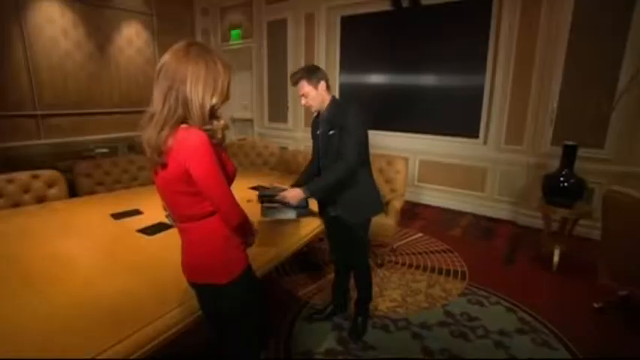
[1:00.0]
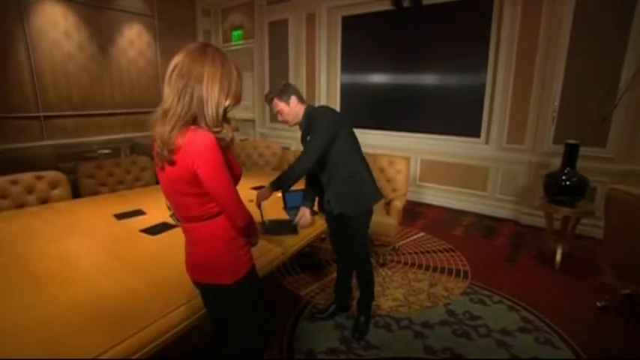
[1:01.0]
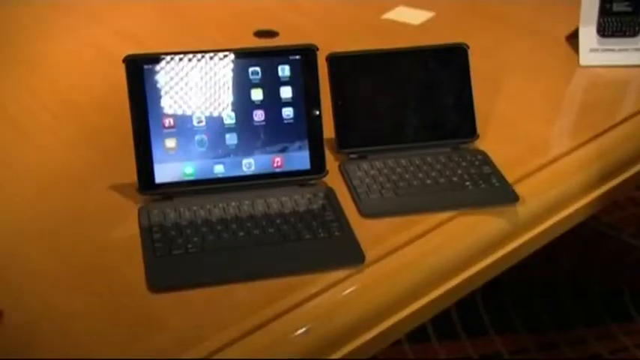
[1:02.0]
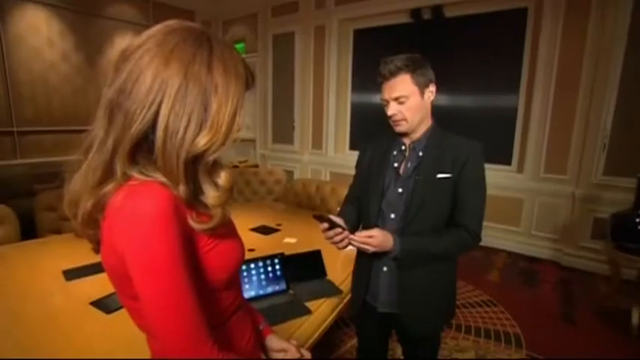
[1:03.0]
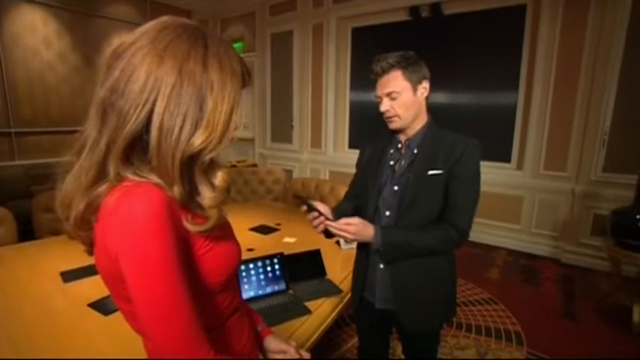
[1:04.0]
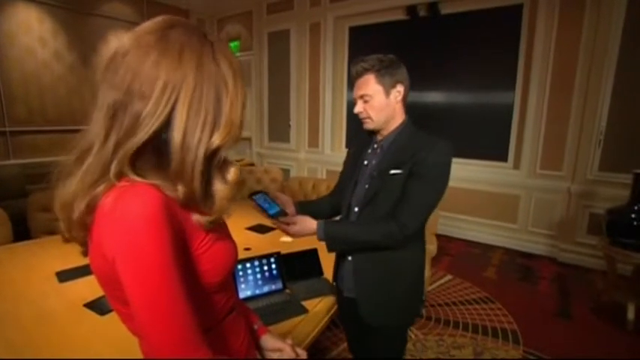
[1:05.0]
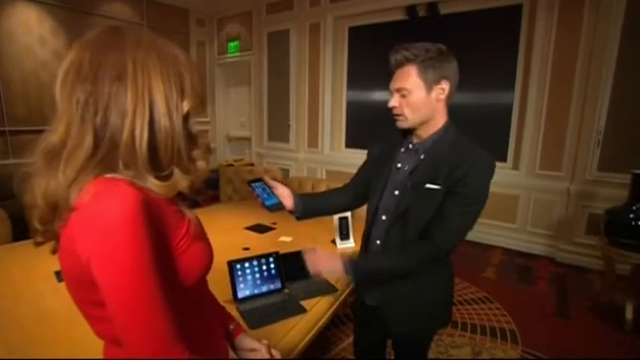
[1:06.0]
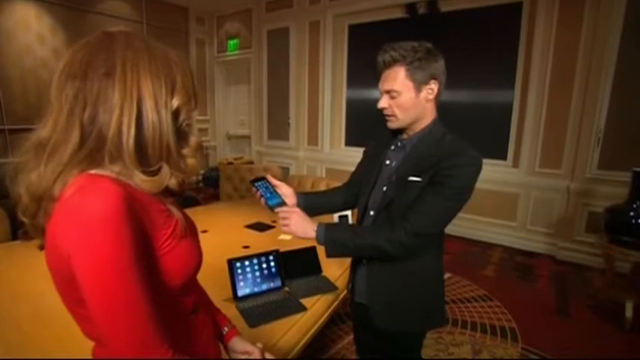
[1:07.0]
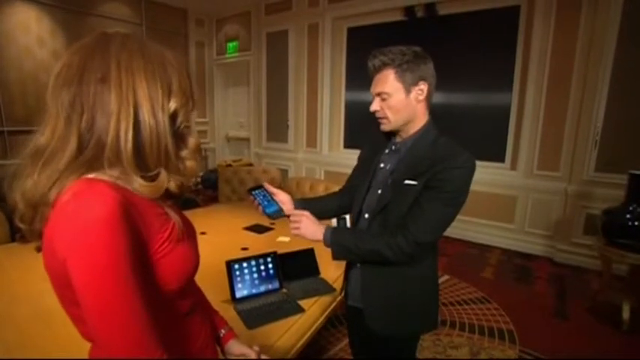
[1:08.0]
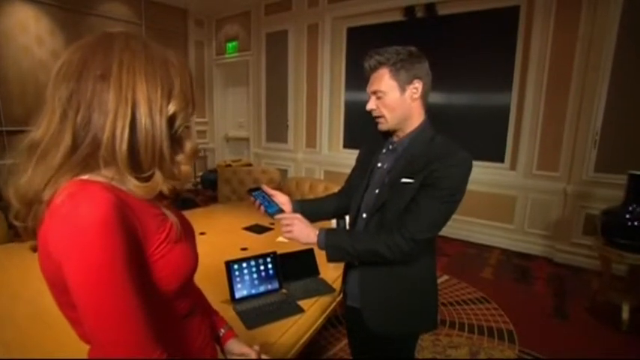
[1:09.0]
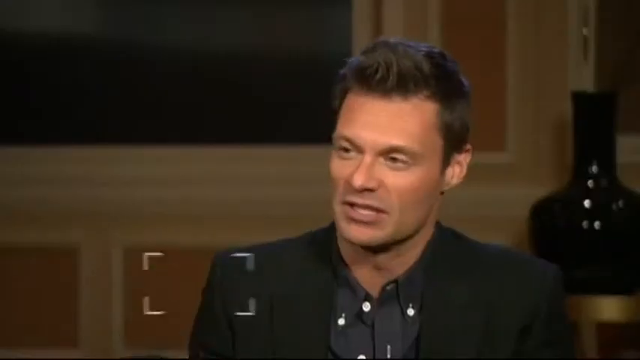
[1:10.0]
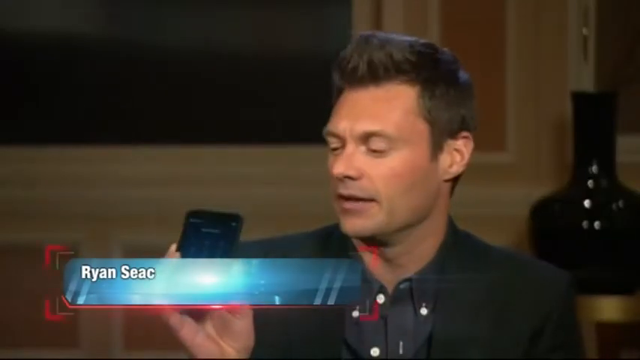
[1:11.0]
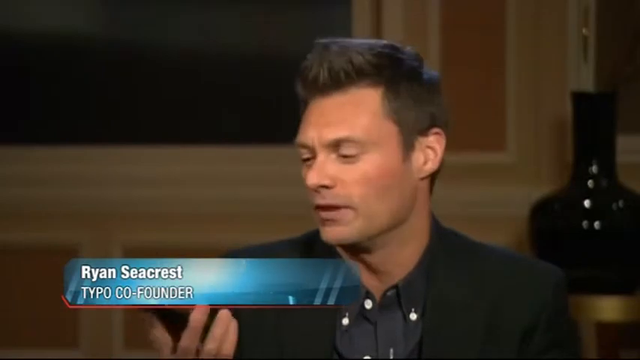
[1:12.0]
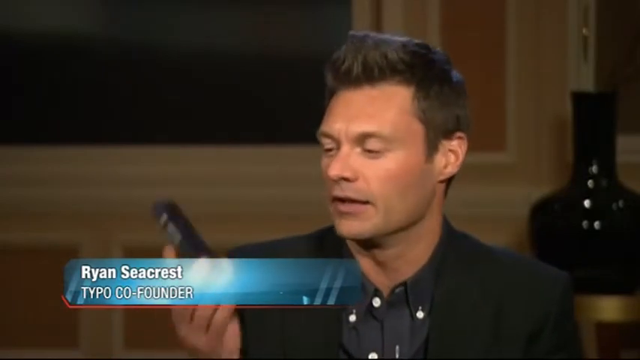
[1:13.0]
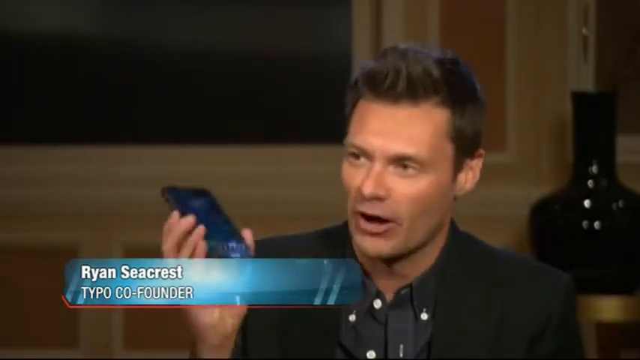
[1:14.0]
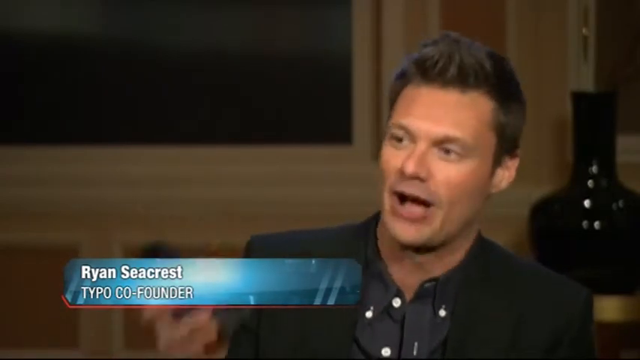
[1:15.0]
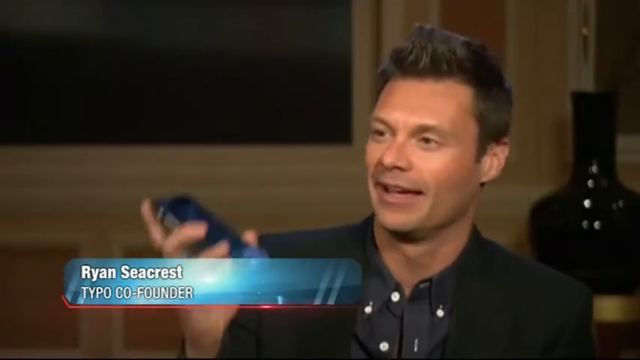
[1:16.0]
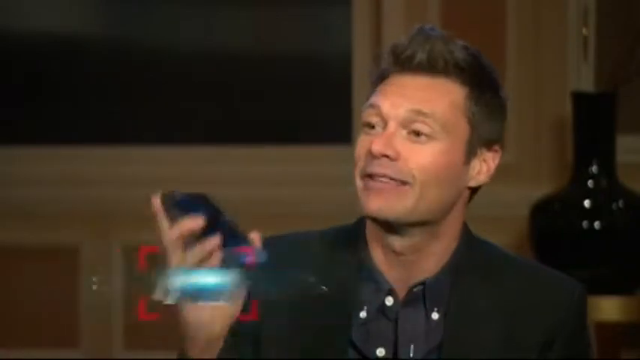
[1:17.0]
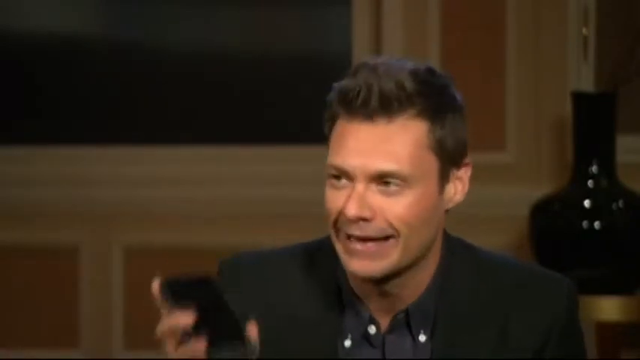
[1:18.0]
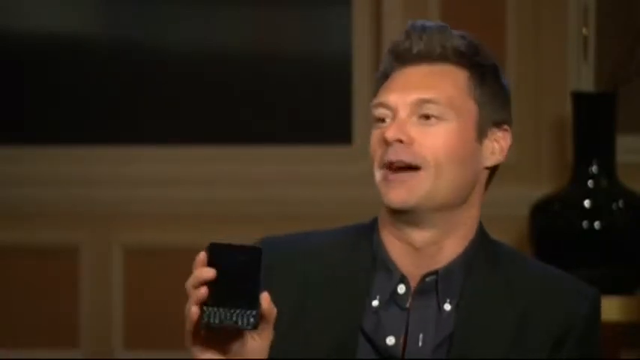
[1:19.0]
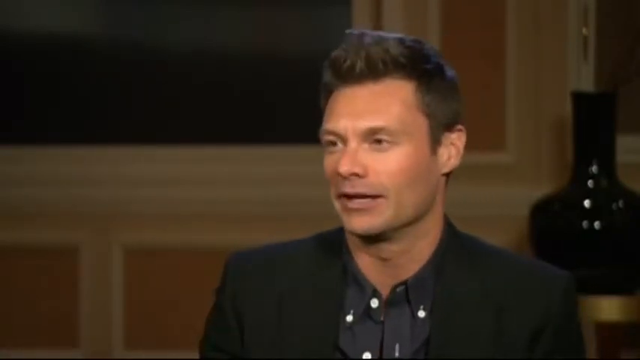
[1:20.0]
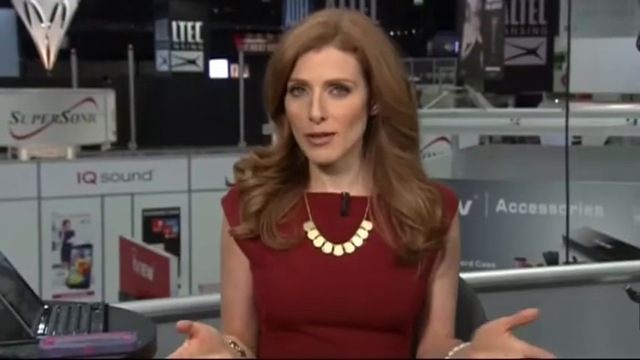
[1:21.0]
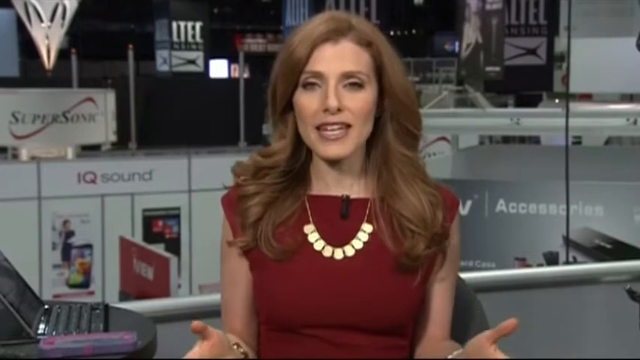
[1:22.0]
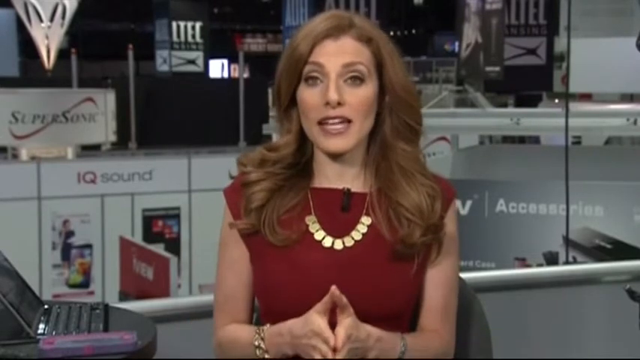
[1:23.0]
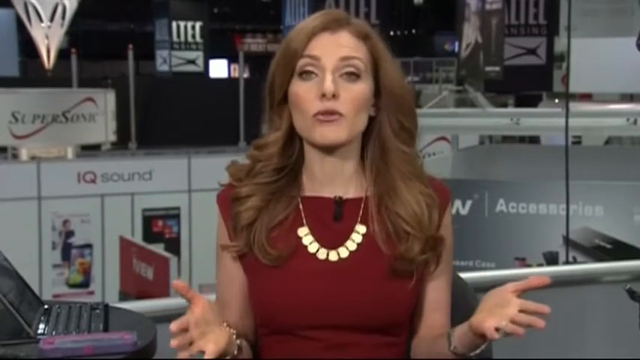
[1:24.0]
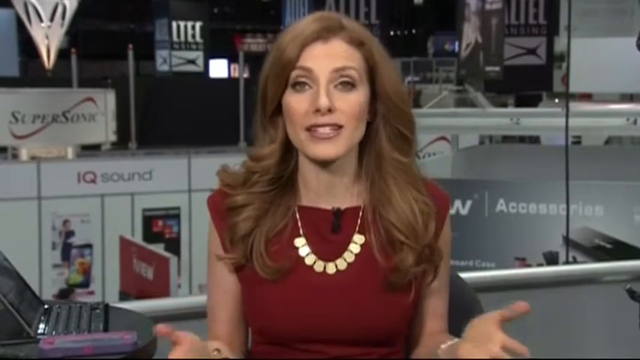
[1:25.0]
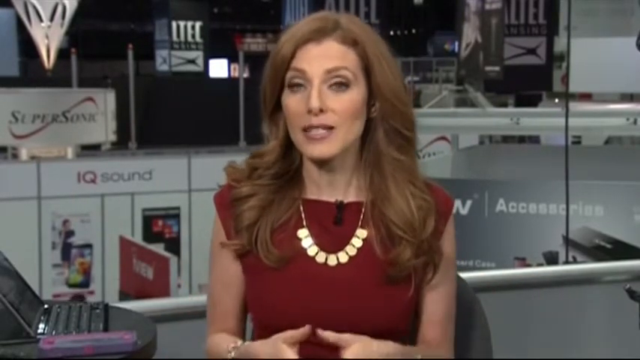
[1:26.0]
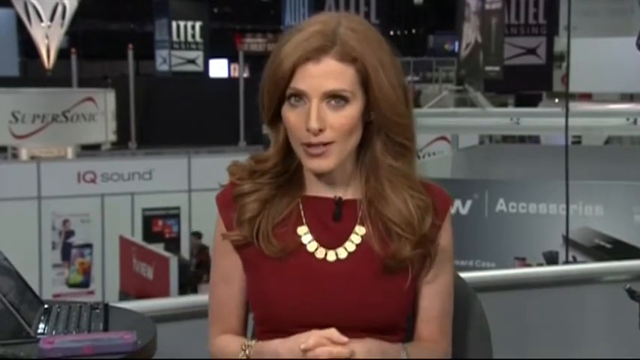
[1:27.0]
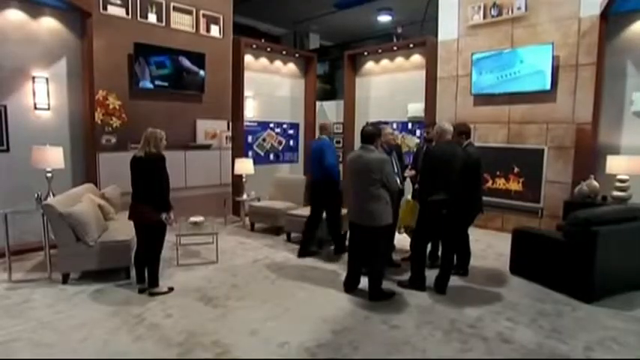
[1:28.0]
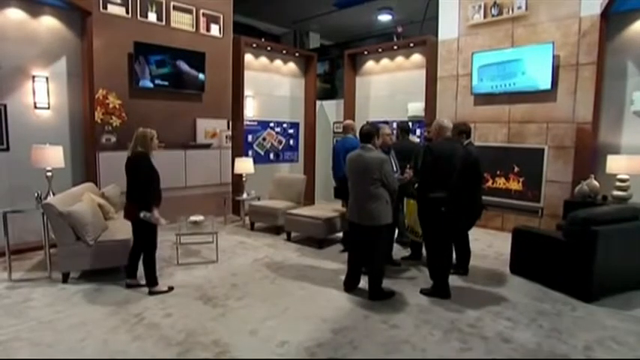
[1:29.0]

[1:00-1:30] A reporter talks with a person in a room who, on closer look, appears to be someone other than Matt. They show off a very small laptop, then hold up a phone and show it to her. Holding the phone in his right hand, he uses his left hand to grab the bottom of it, trace a smiley-face-like curve along the bottom, curve back with his finger and slide it across. A close-up of the man's face shows that he is Ryan Seacrest, the Typo co-founder. His phone screen is black, so it is not on, and he shakes his hands up and down with the phone, apparently for emphasis.